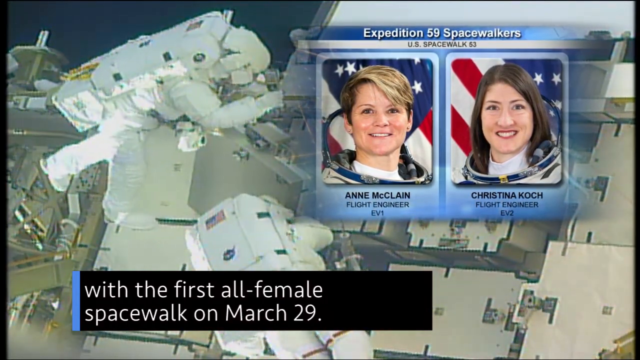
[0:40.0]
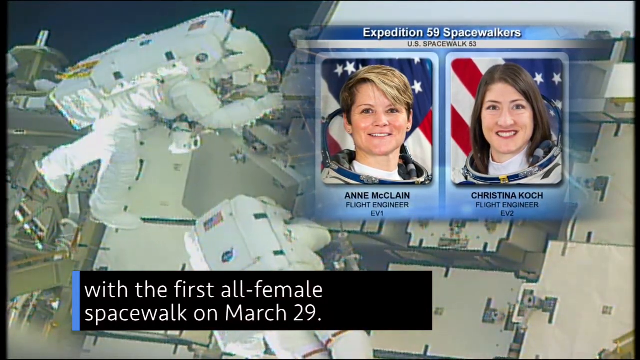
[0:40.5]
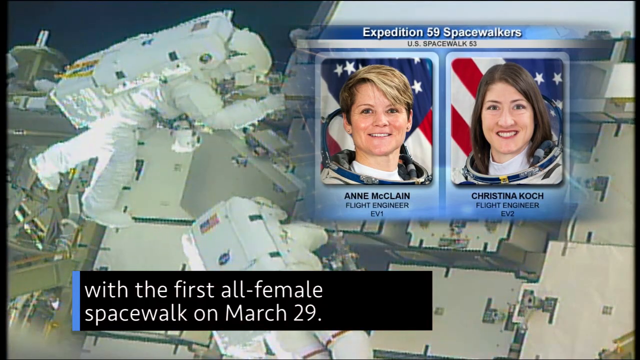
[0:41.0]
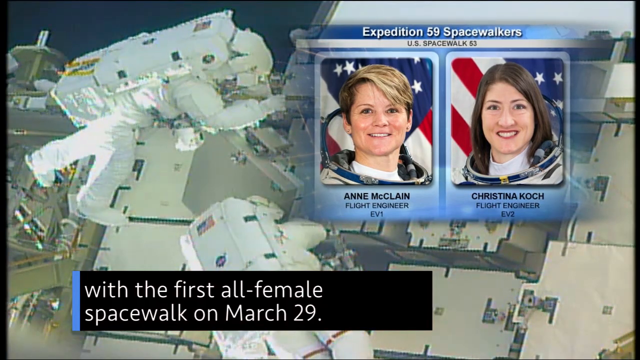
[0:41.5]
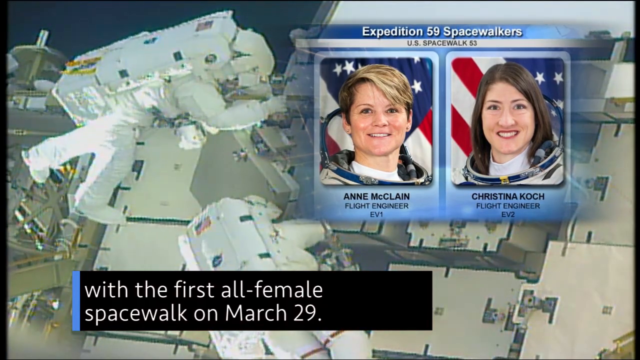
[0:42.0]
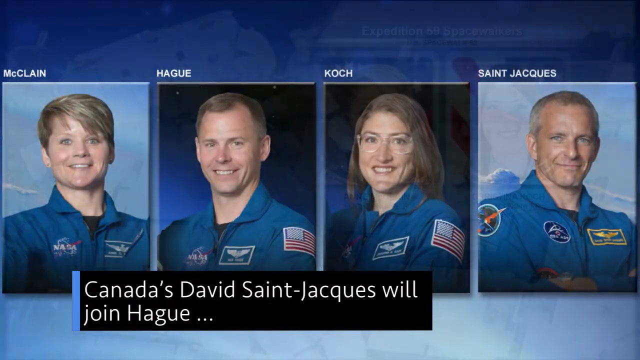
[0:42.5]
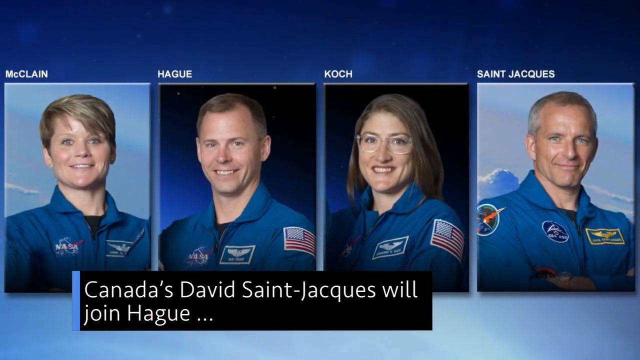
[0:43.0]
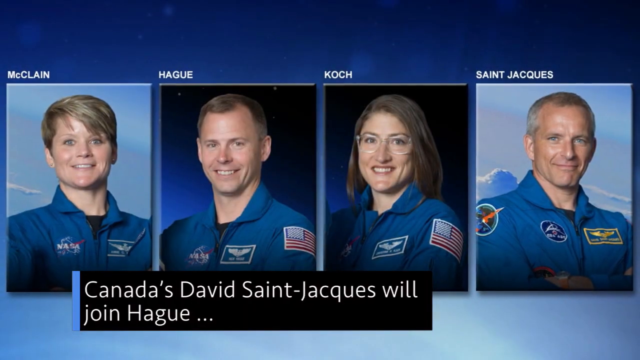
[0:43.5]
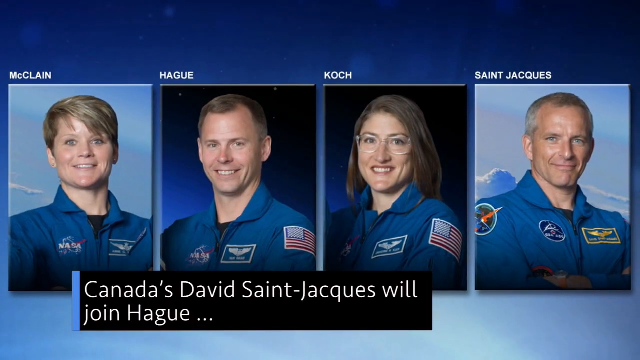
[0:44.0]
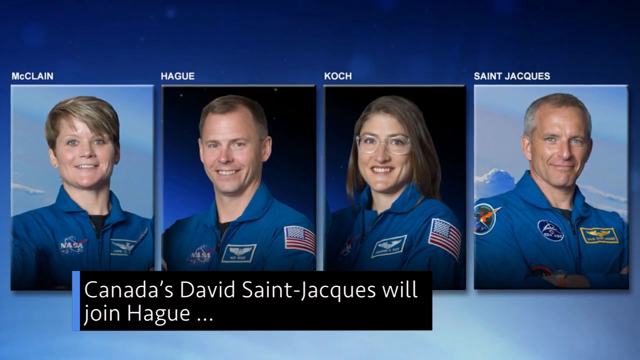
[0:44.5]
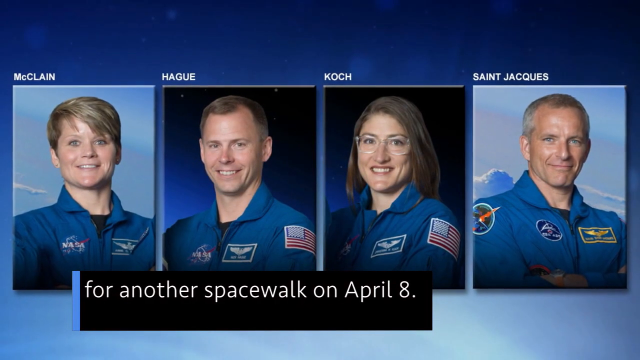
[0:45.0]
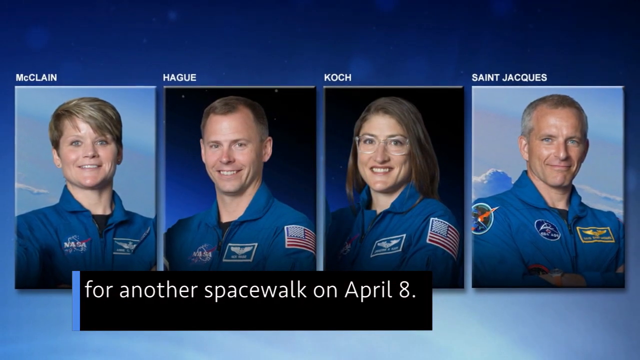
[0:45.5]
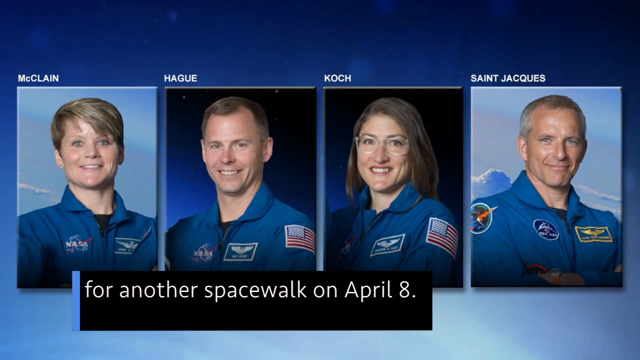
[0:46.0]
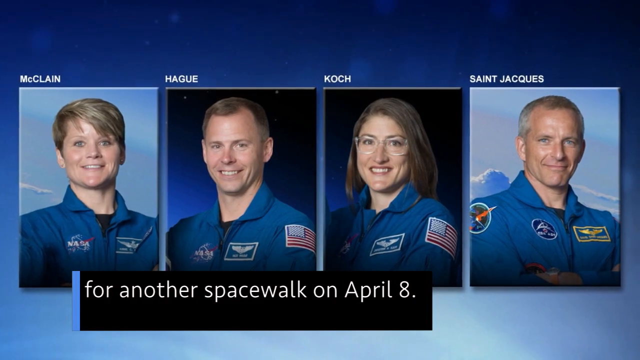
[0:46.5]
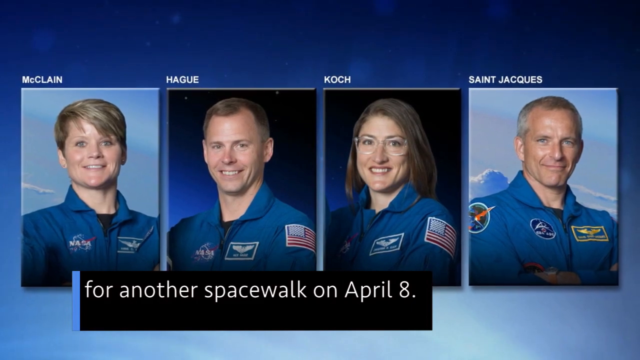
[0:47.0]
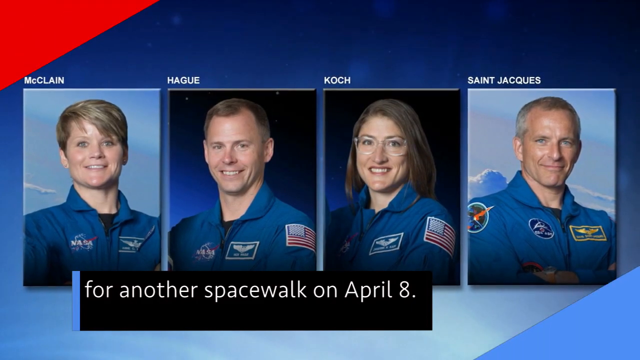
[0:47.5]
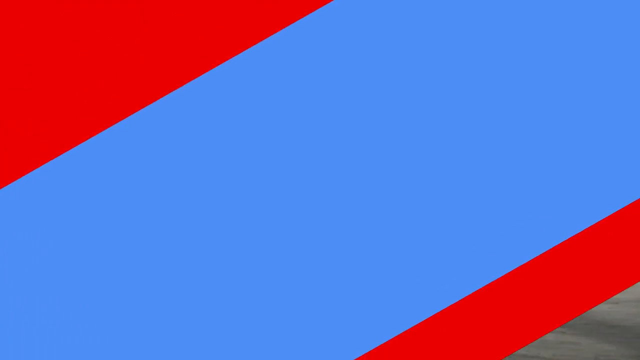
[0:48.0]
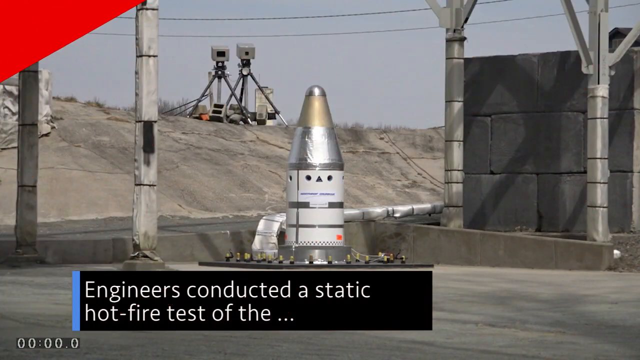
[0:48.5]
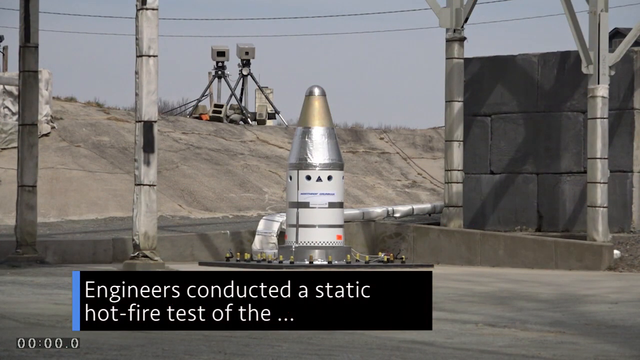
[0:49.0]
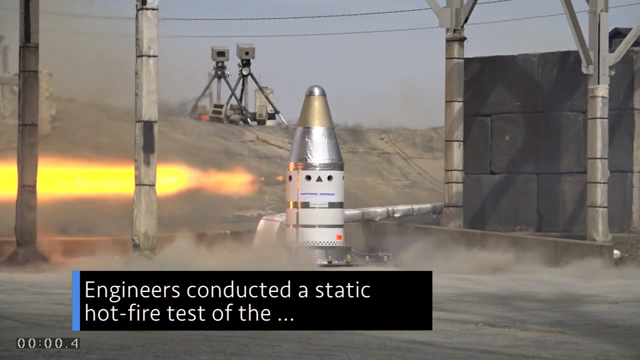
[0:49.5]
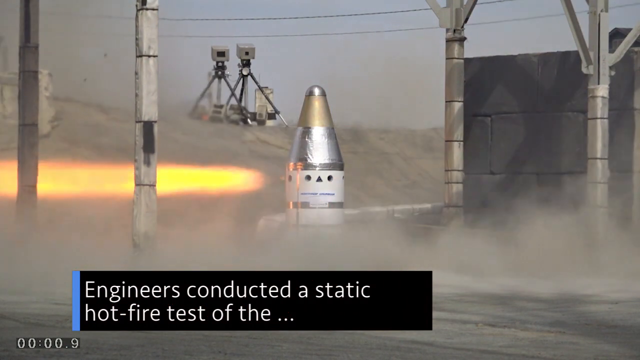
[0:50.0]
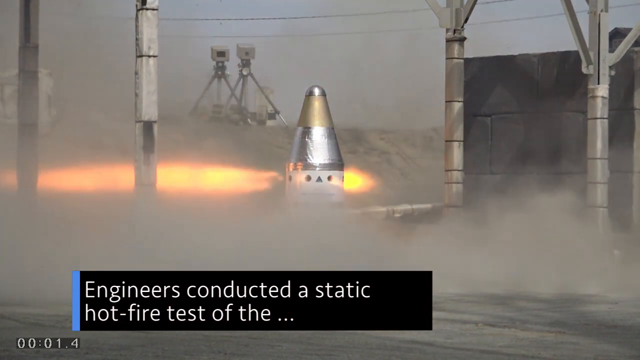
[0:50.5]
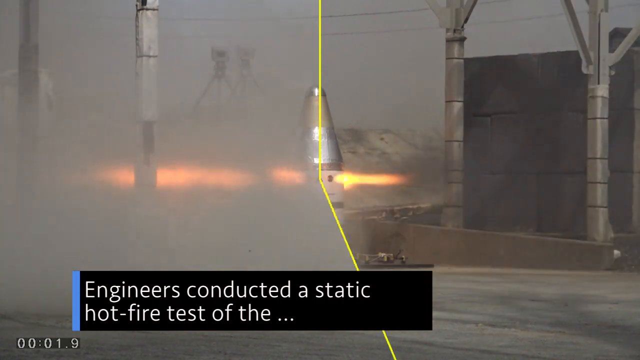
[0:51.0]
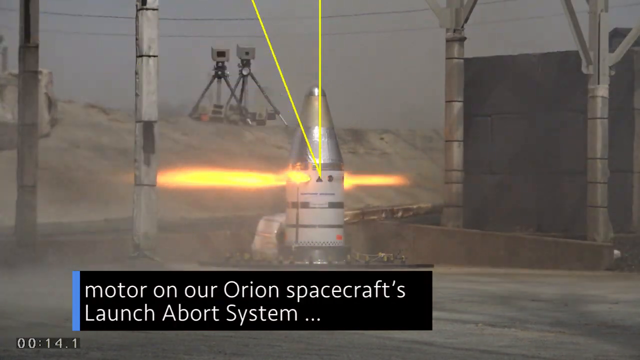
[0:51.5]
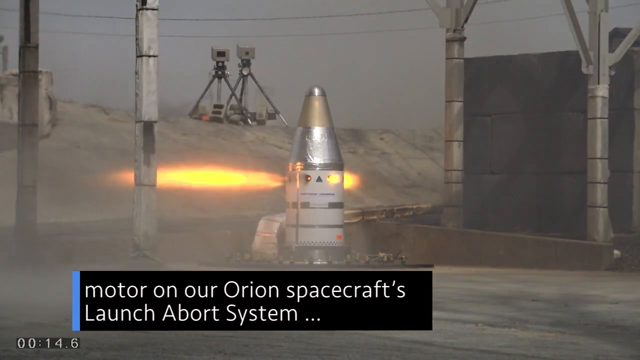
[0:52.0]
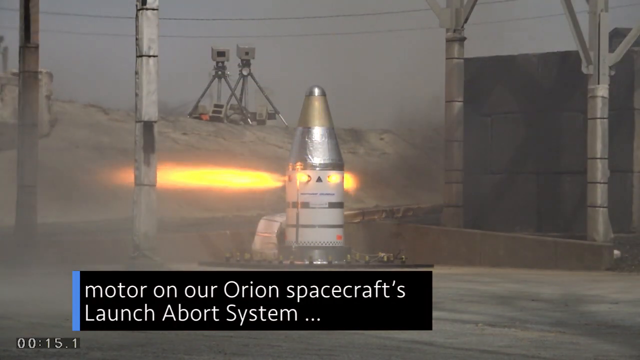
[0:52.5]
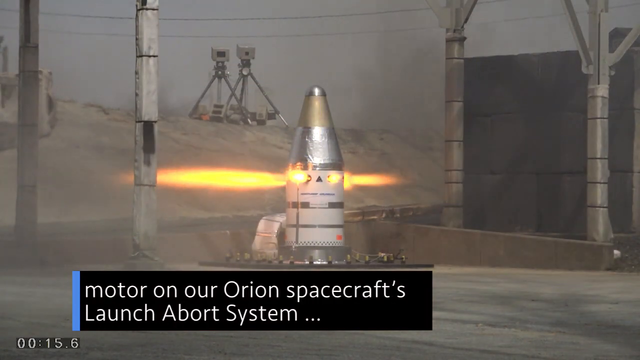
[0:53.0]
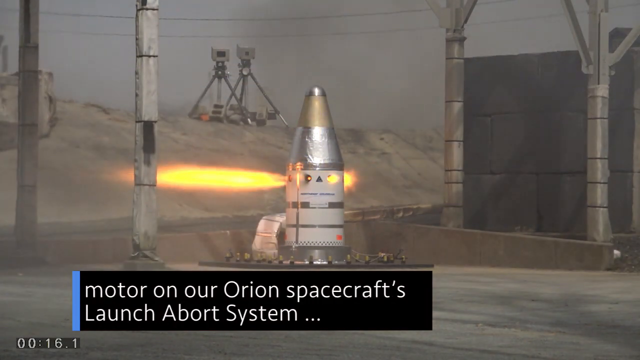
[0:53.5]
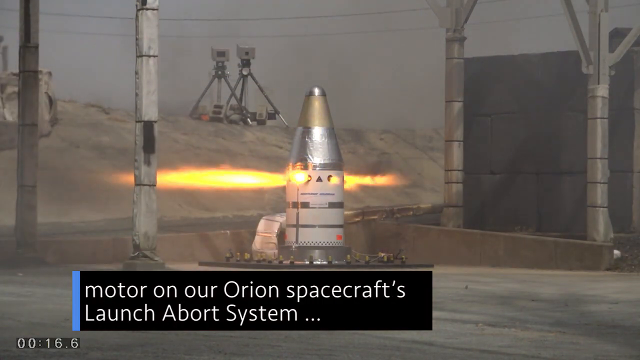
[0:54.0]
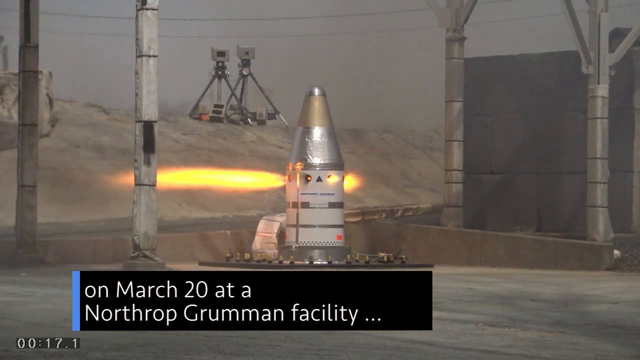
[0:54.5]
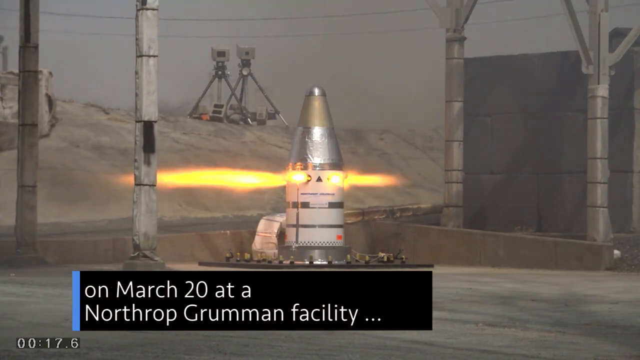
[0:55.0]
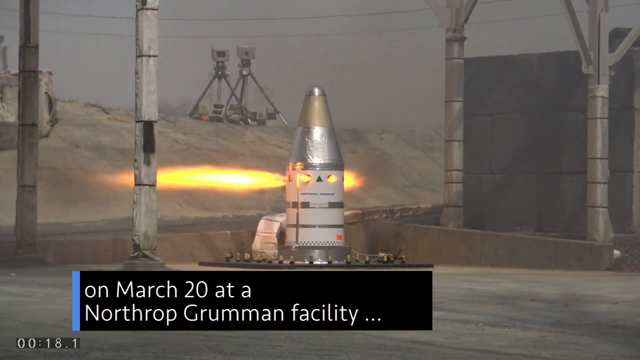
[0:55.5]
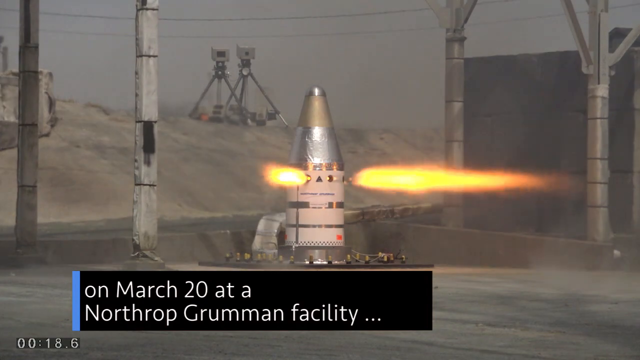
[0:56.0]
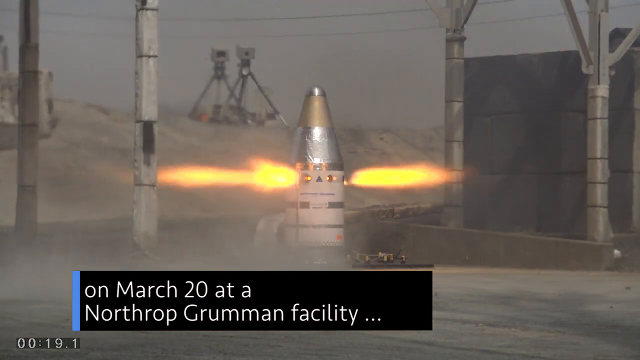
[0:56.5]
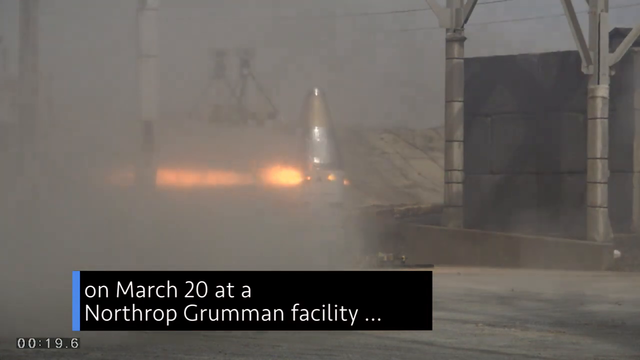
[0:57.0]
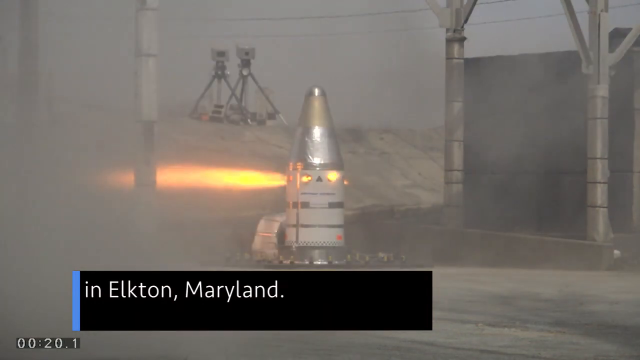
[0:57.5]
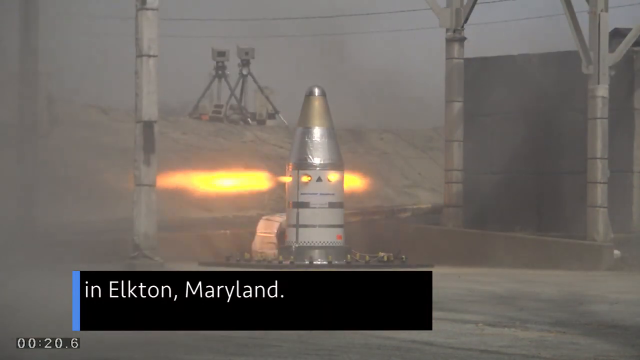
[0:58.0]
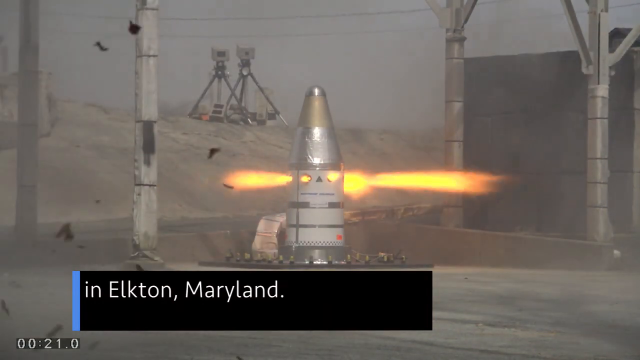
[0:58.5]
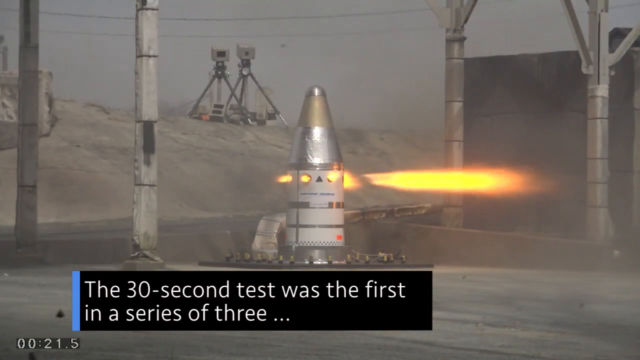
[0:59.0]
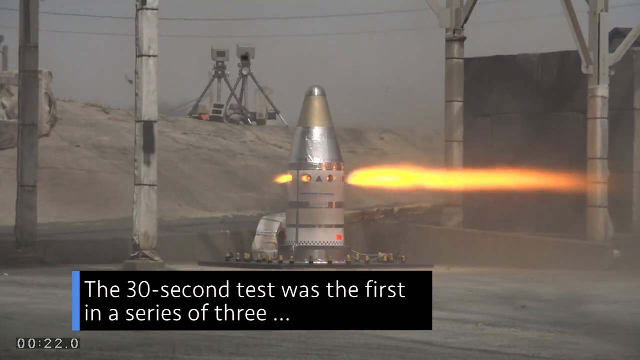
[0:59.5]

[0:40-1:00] Text says that Anne McClain and Christina Koch, flight engineers on the International Space Station, were the first all-female spacewalk on March 29th, and a video of them working on the space station plays on the left side of the screen. Another spacewalk on April 18th is scheduled with other people. The scene transitions to engineers conducting a static hot fire test of a rocket engine, the motor of the Orion spacecraft's launch abort system, at the Northrop Grumman facility in Virginia. The rocket is in the center of the screen, with fire shooting out of it in all directions from the center of the rocket during the 30-second test.